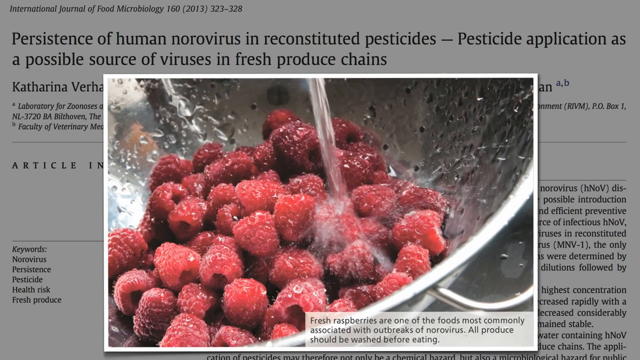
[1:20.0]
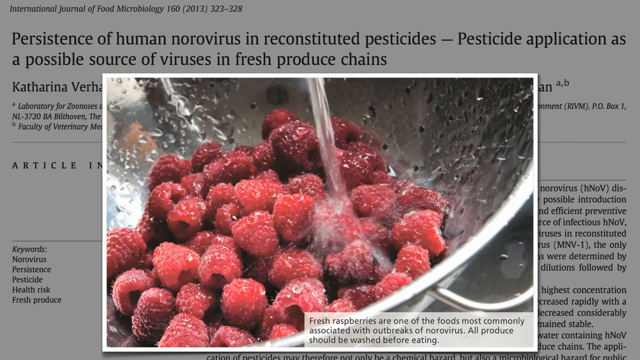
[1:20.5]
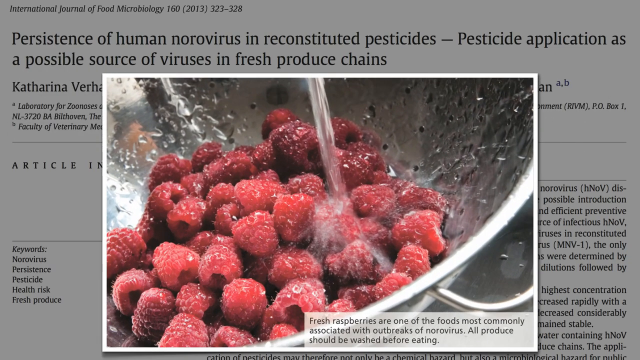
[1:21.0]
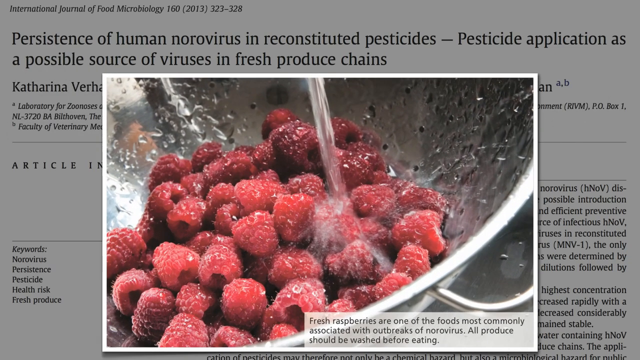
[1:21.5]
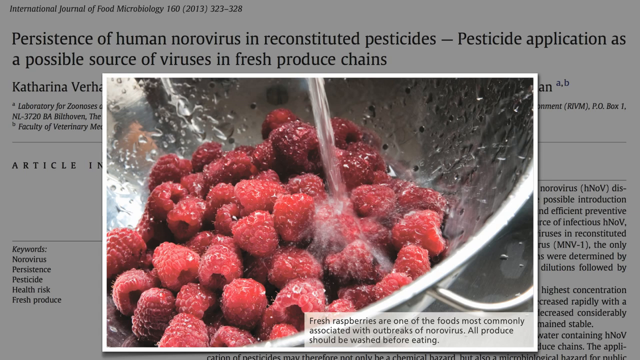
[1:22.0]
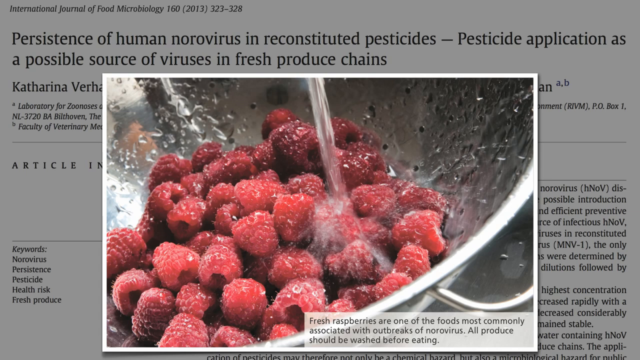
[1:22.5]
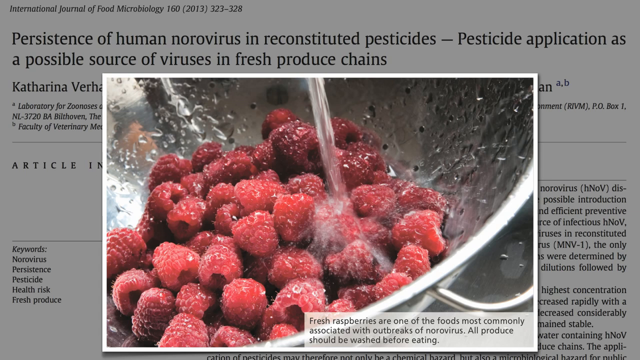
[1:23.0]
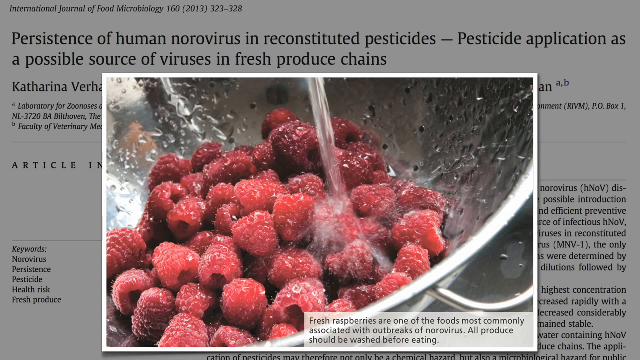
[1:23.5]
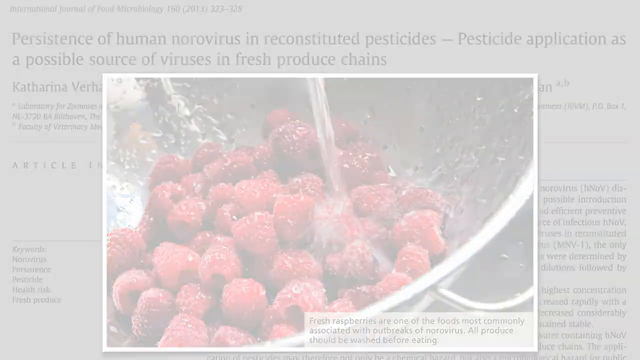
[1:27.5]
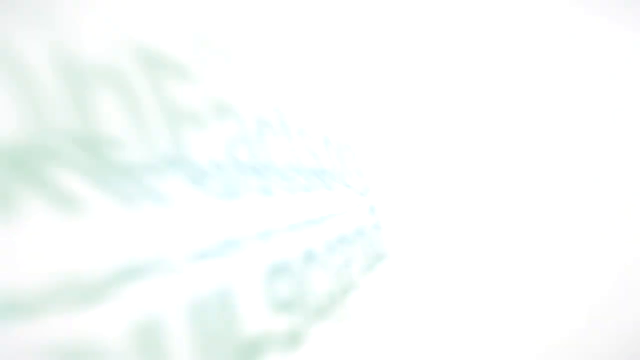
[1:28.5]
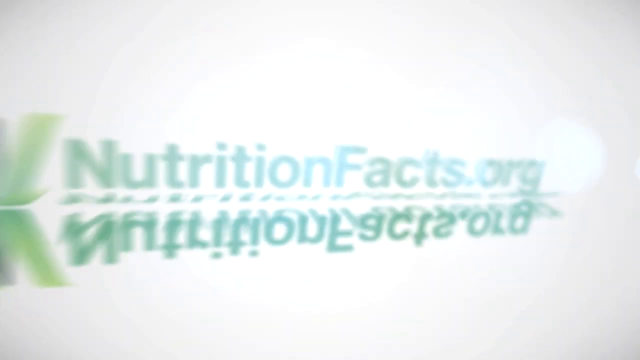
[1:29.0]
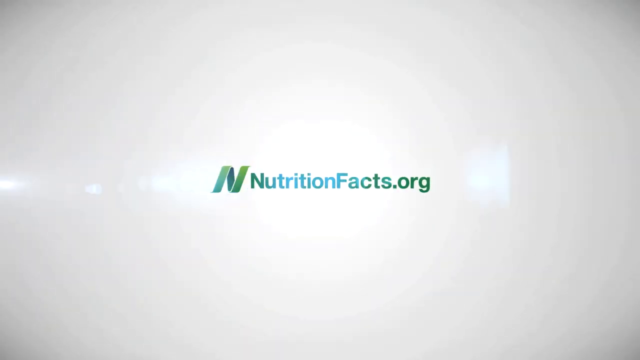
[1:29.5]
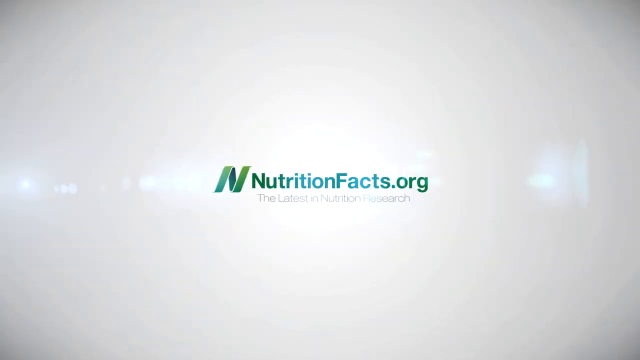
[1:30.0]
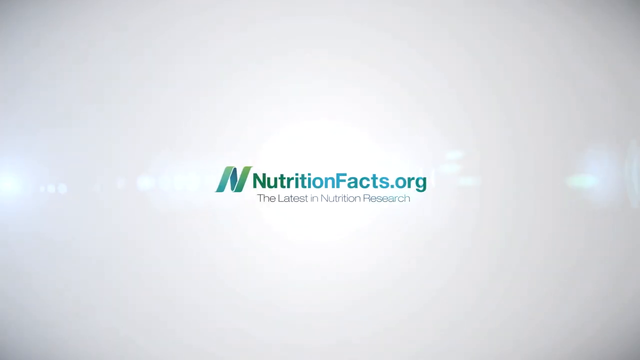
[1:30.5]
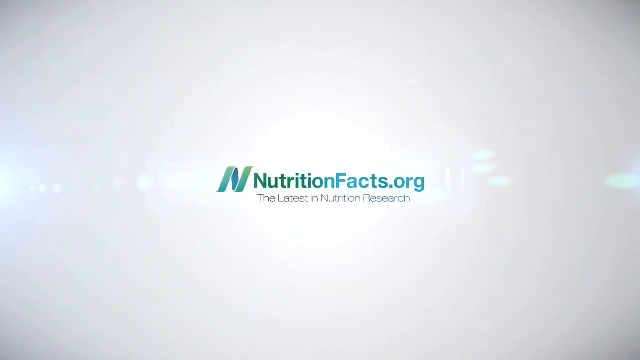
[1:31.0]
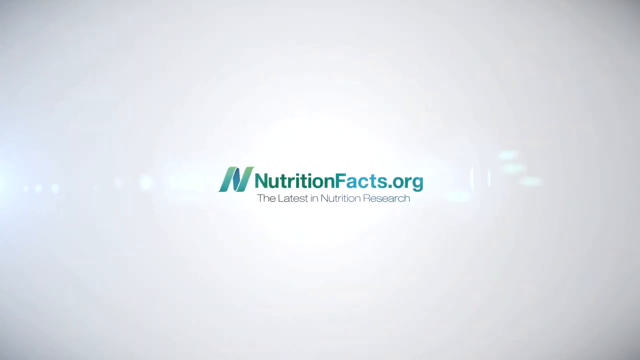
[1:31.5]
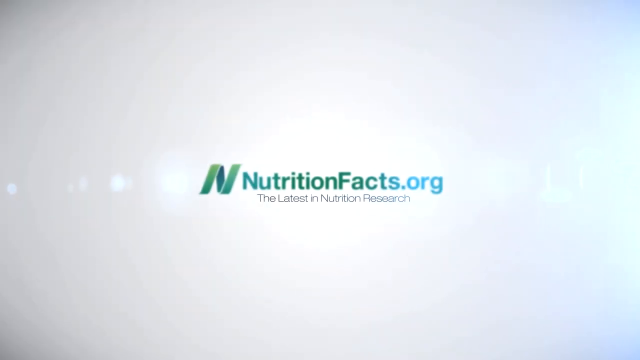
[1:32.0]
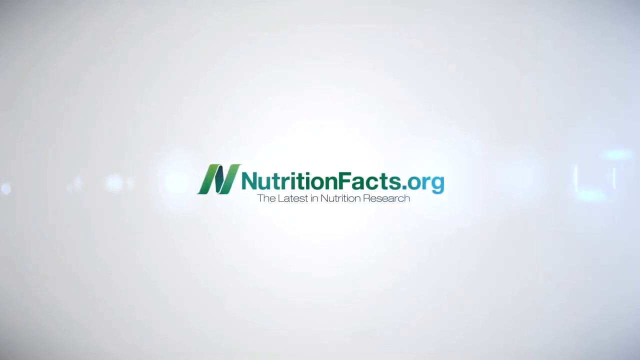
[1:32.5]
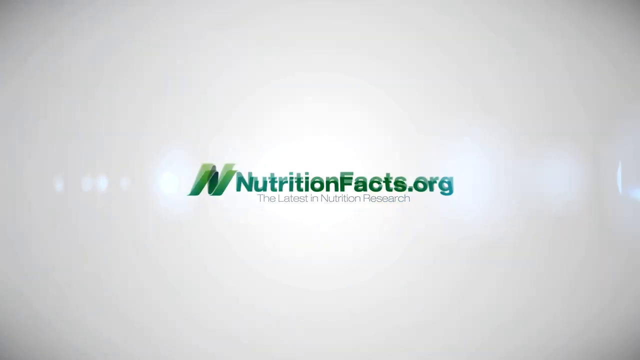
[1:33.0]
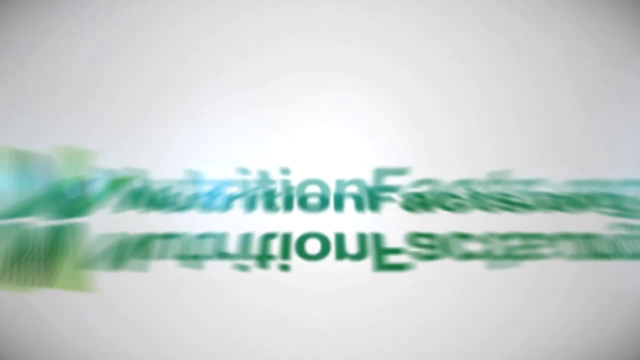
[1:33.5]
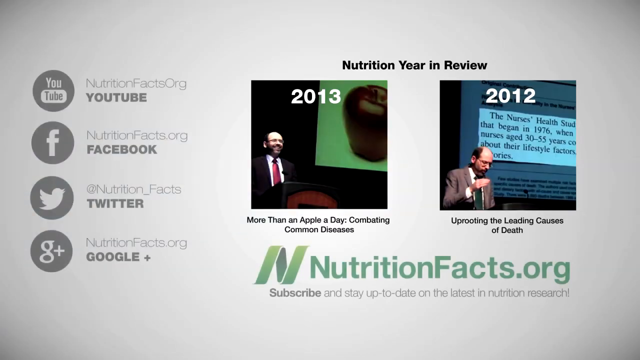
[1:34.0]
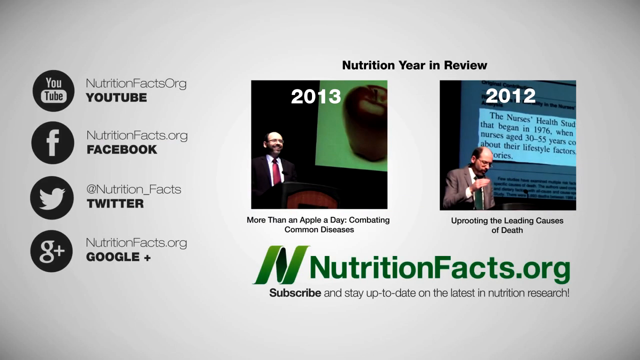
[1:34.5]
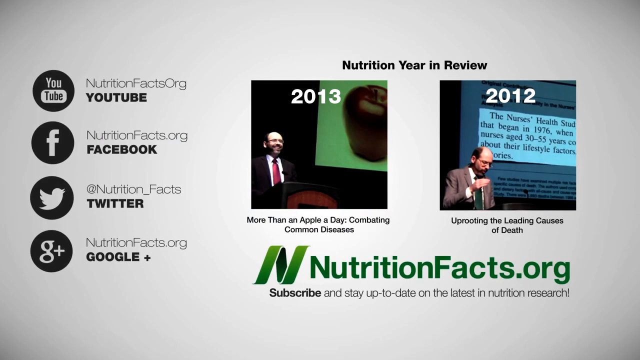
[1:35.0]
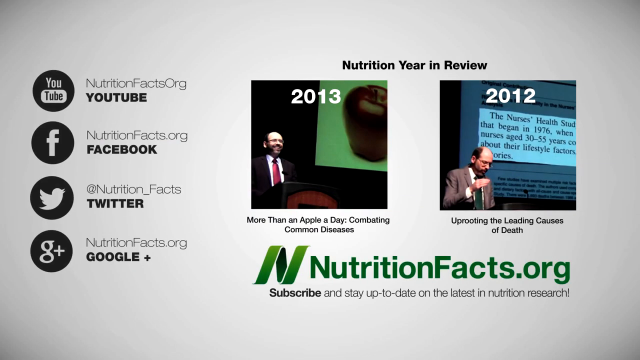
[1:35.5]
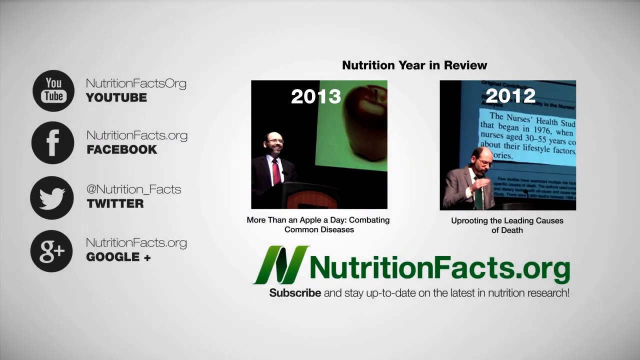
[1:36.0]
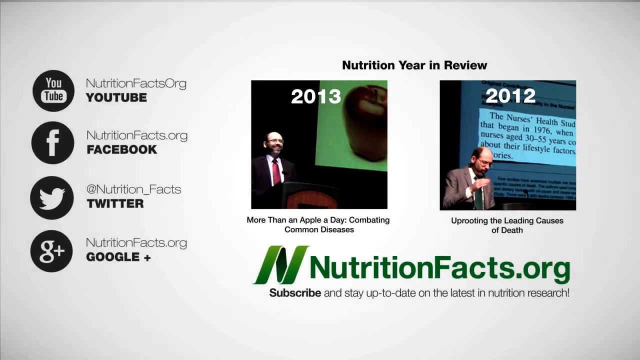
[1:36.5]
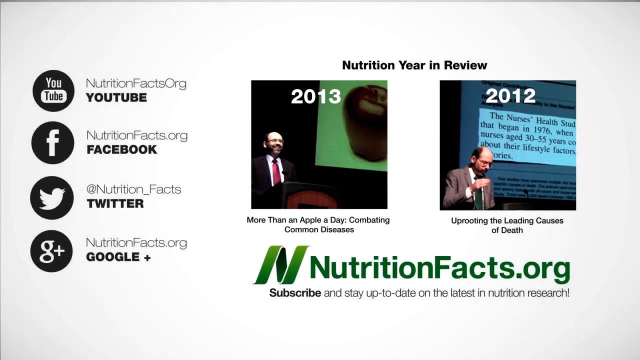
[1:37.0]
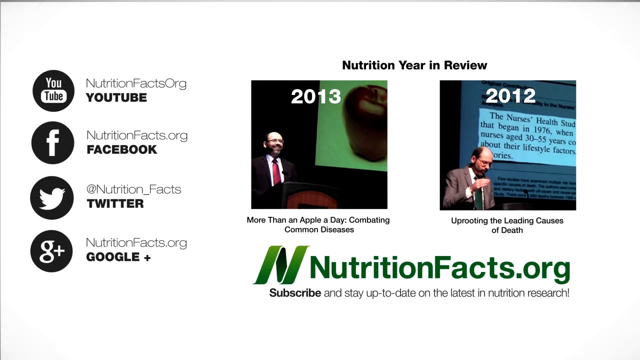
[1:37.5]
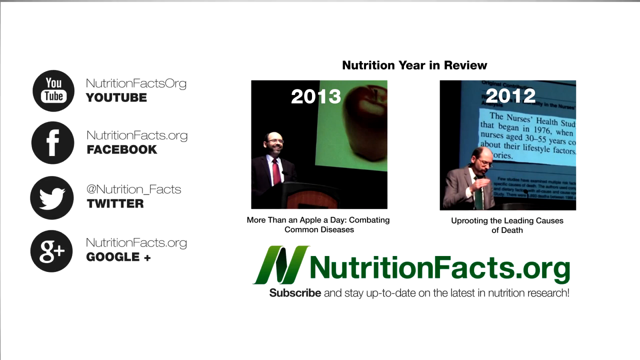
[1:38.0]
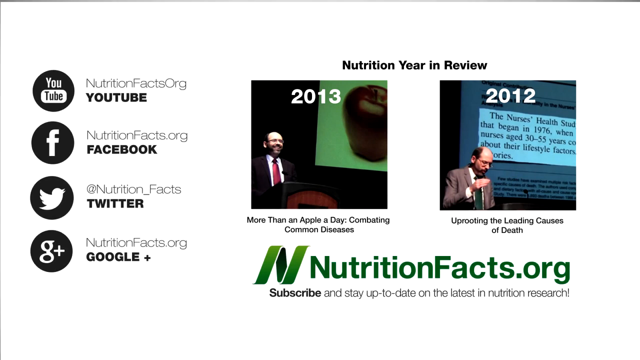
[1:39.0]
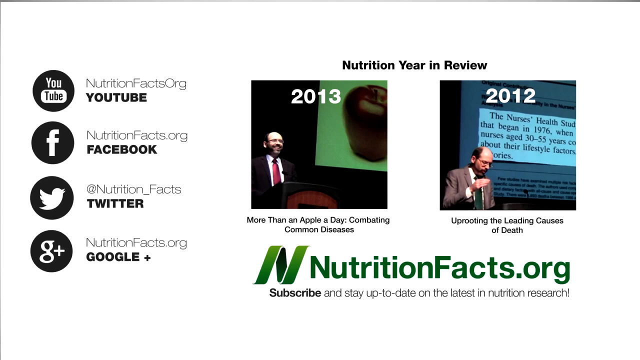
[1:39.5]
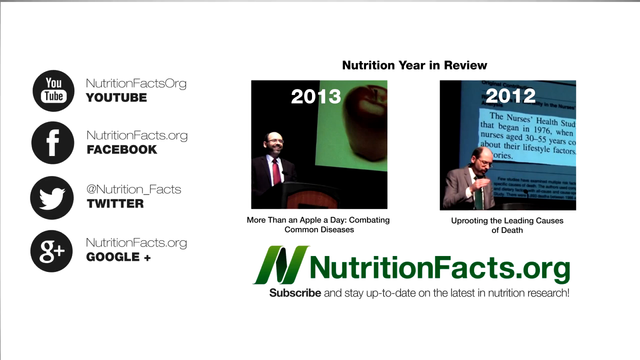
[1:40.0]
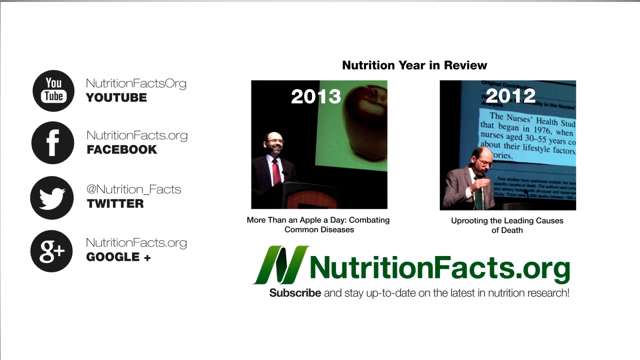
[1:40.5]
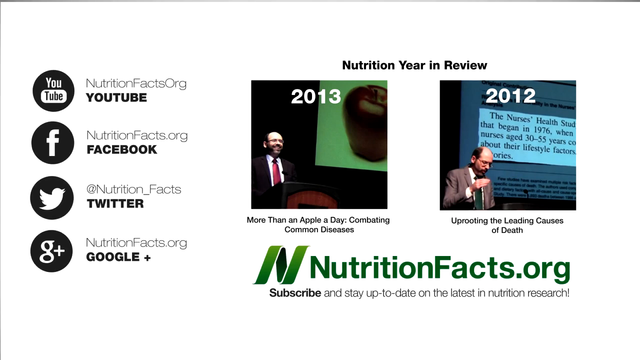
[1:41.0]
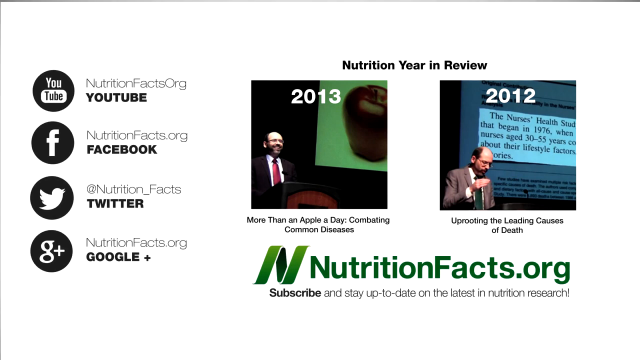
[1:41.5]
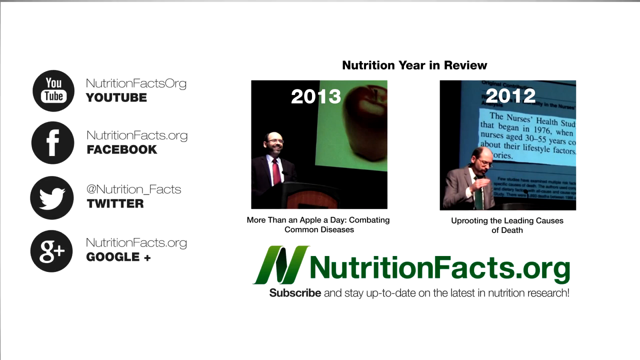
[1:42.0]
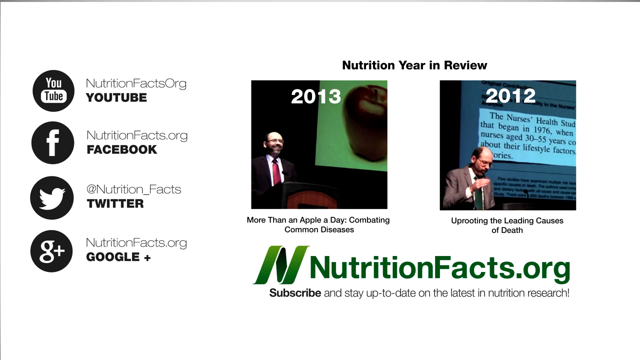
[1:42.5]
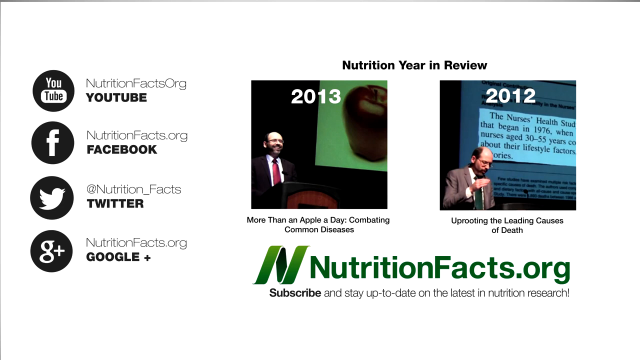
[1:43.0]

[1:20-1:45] A photo of raspberries in a silver bowl being washed by a single stream of water takes up most of the screen. In the bottom right corner it carries the caption "fresh raspberries are one of the foods most commonly associated with outbreaks of norovirus." The whole screen then flips away with a transition to a white screen showing the same title, "nutritionfacts.org," with the subtitle "the latest in nutrition research," and the same light effects play across the name. This flips away through another transition, and the video ends with social media handles and links for YouTube, Facebook, Twitter and Google Plus. Other recommended videos are listed, including the Nutrition Year in Review 2013 and 2012 editions, along with a recommendation to subscribe and stay up to date on the latest in nutrition research by following the website.